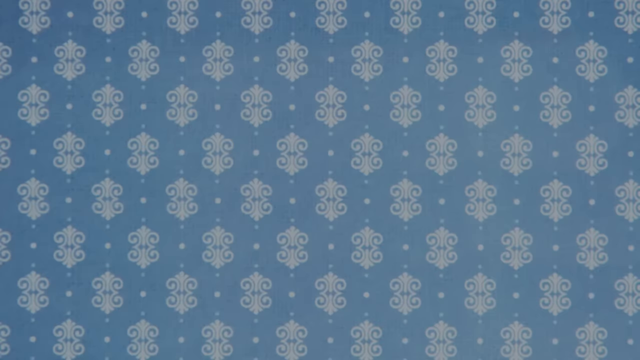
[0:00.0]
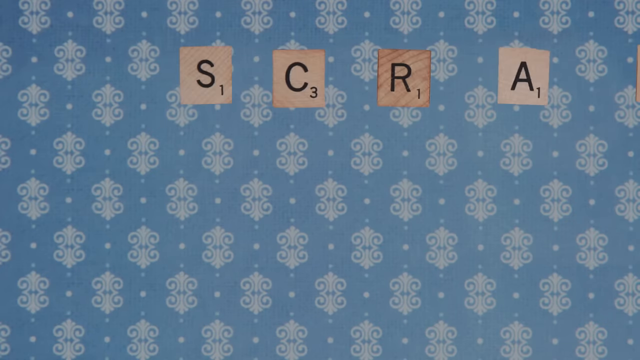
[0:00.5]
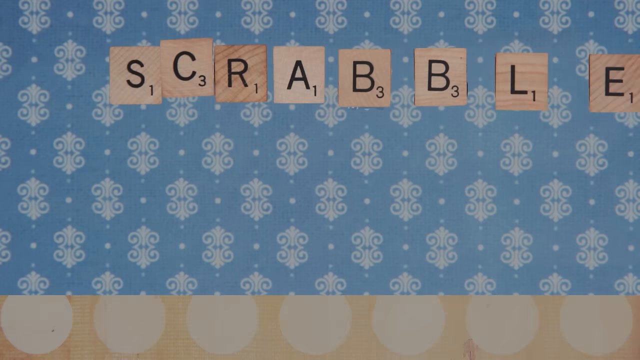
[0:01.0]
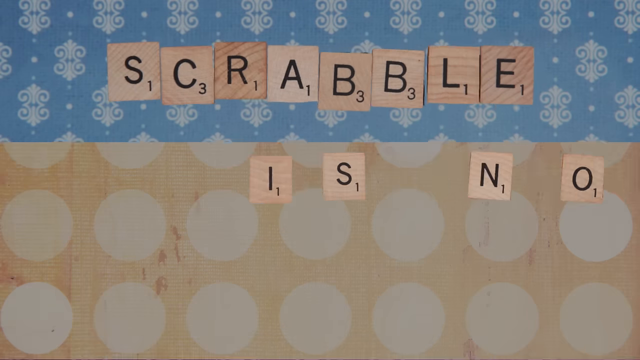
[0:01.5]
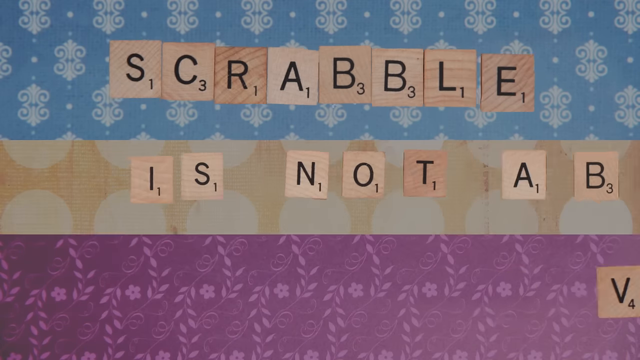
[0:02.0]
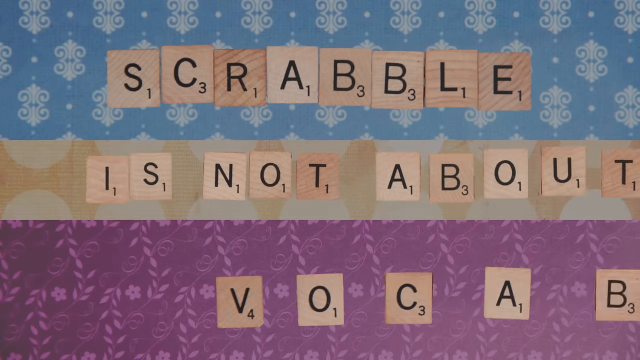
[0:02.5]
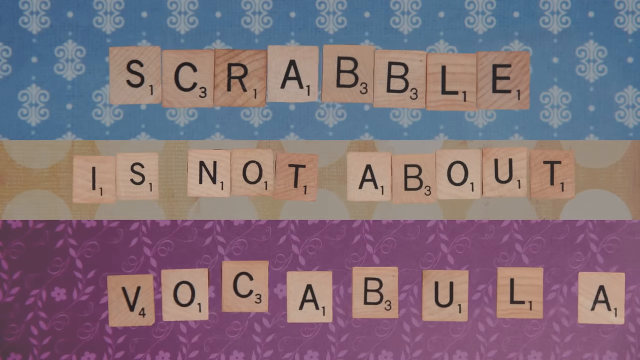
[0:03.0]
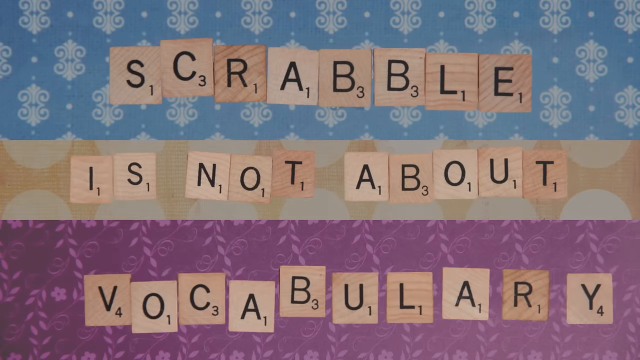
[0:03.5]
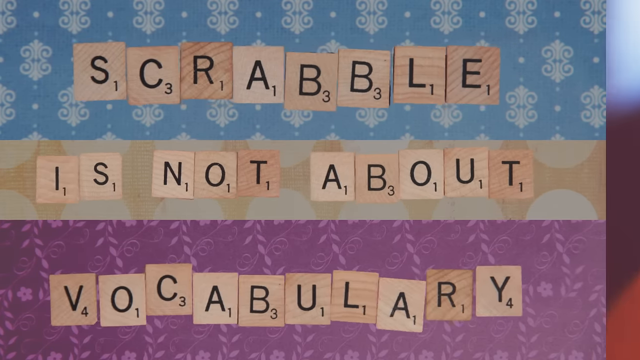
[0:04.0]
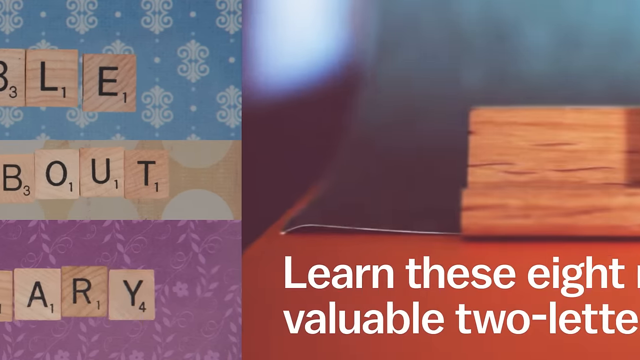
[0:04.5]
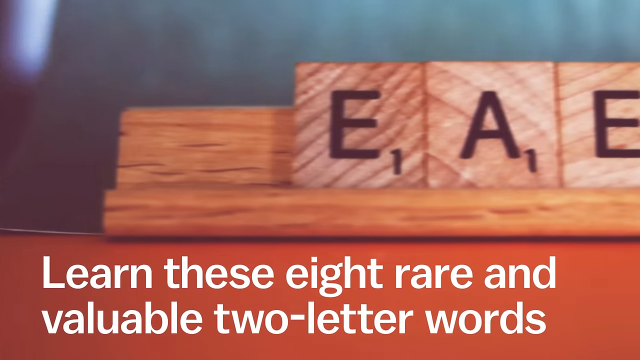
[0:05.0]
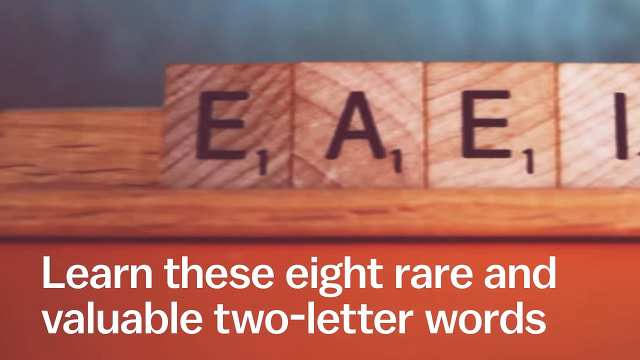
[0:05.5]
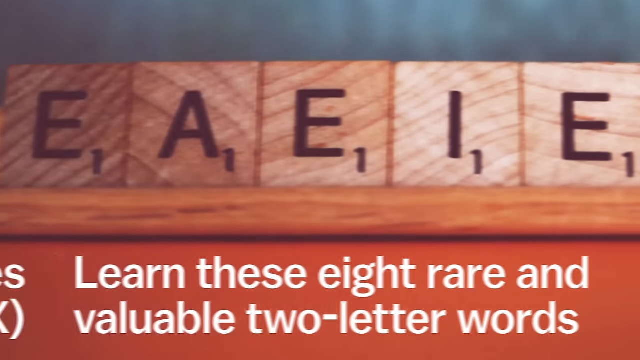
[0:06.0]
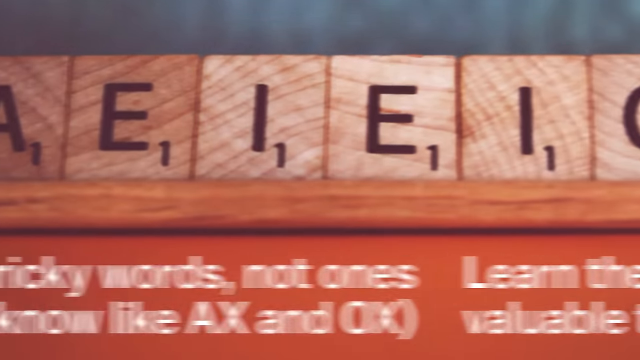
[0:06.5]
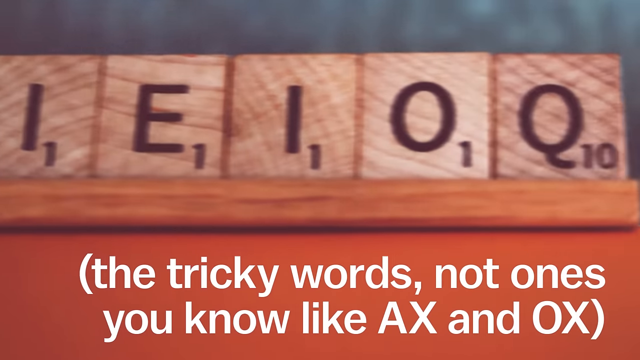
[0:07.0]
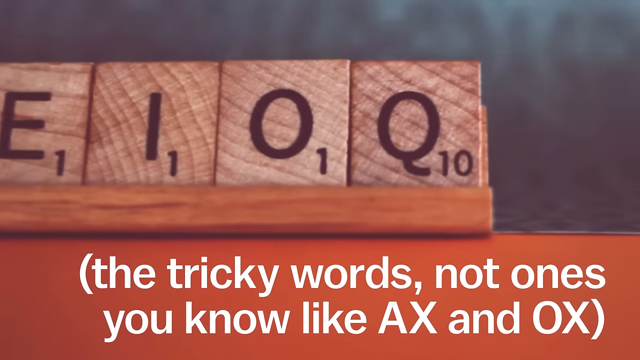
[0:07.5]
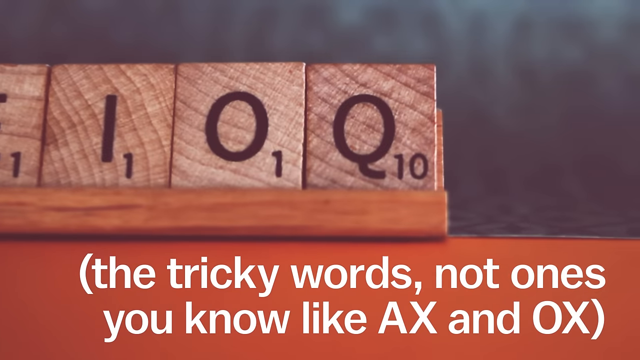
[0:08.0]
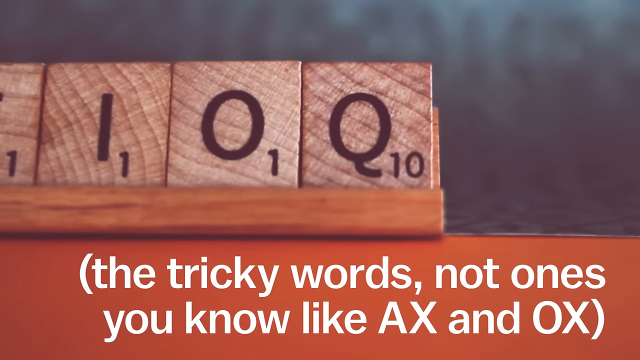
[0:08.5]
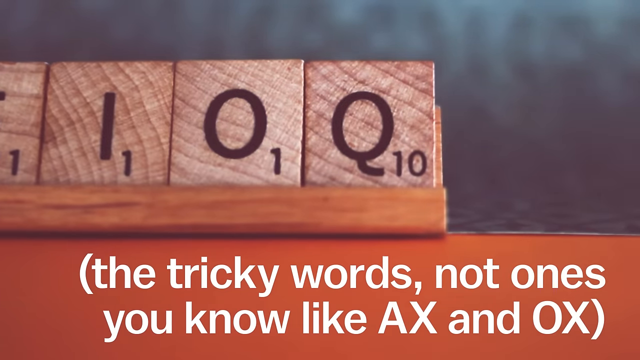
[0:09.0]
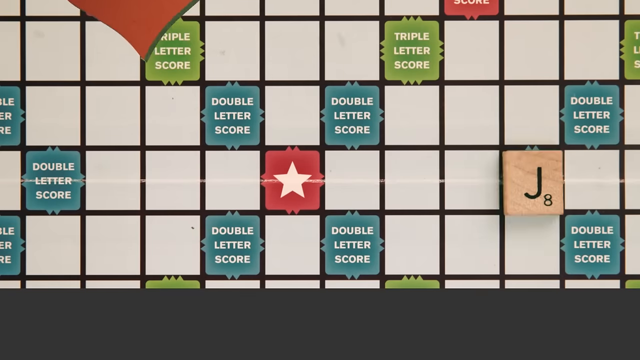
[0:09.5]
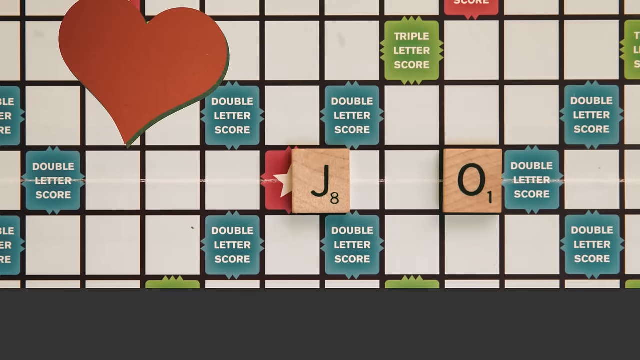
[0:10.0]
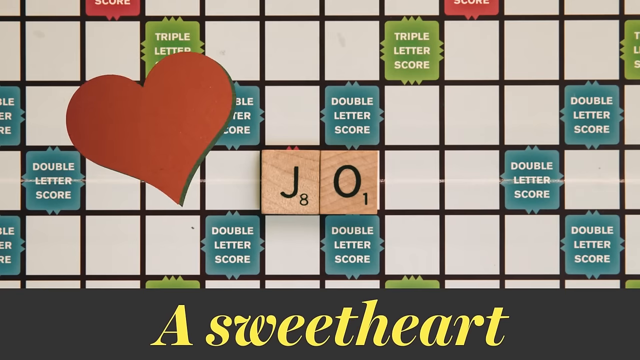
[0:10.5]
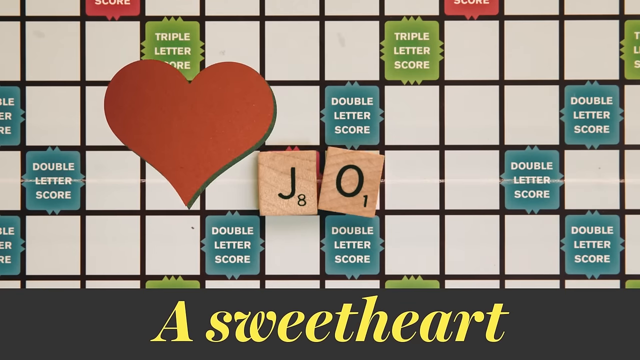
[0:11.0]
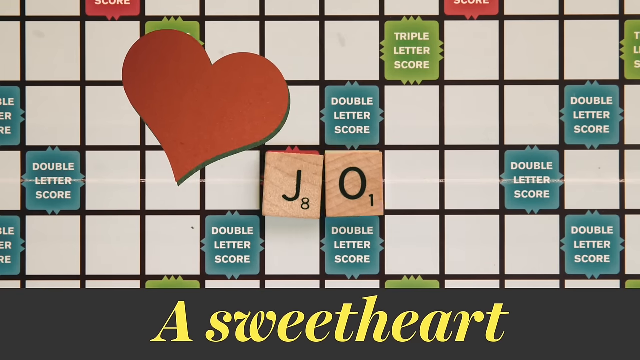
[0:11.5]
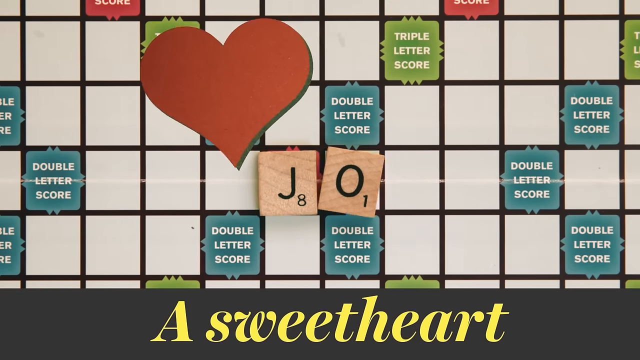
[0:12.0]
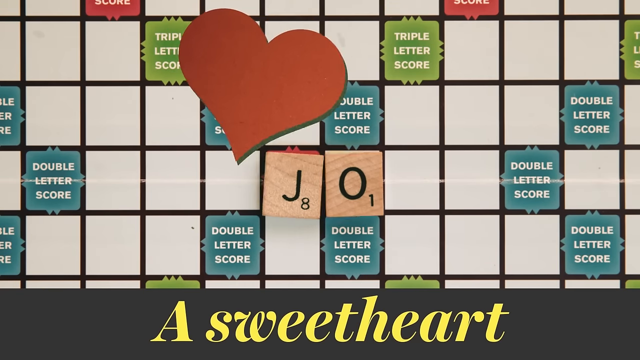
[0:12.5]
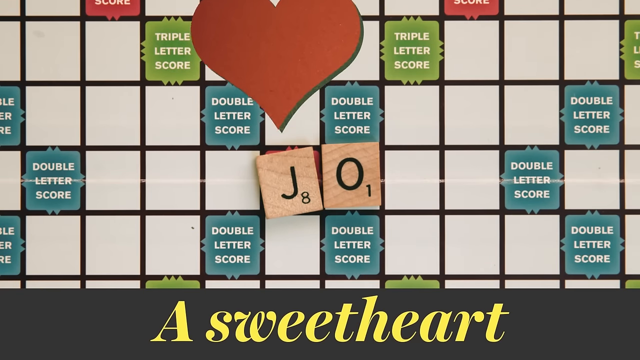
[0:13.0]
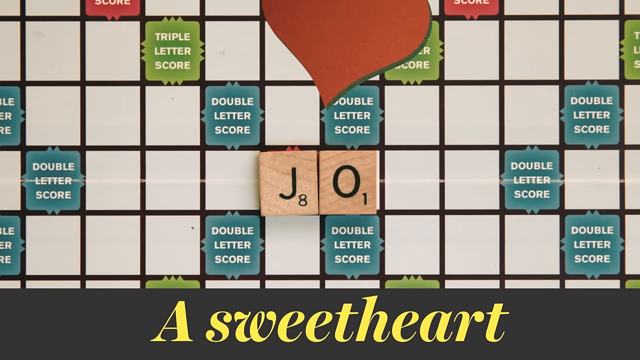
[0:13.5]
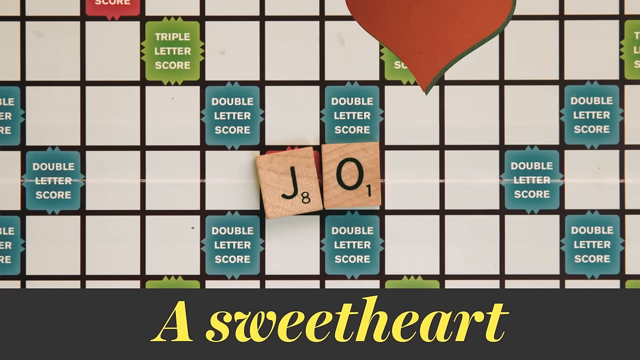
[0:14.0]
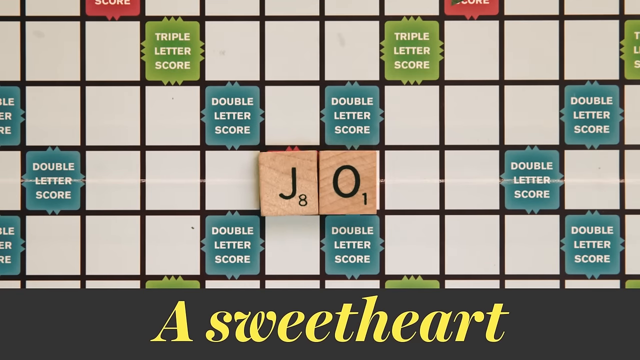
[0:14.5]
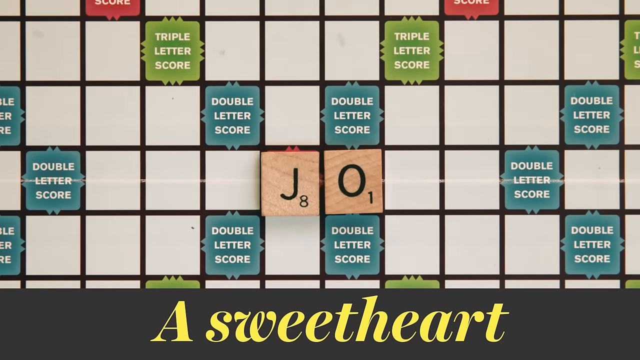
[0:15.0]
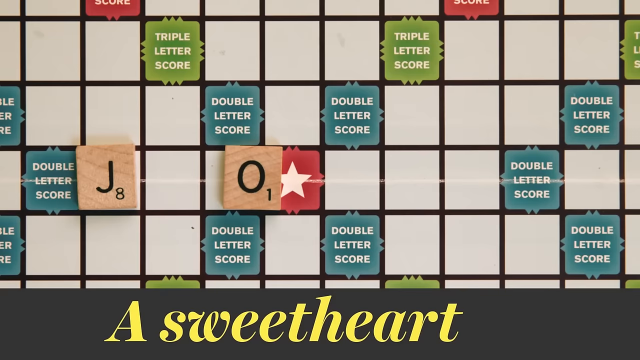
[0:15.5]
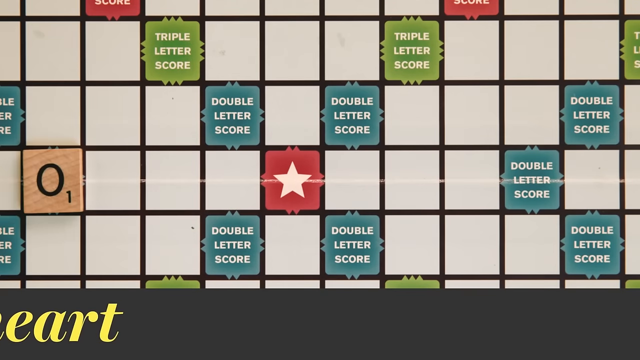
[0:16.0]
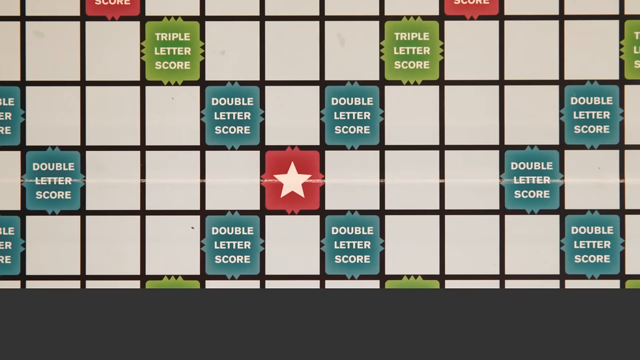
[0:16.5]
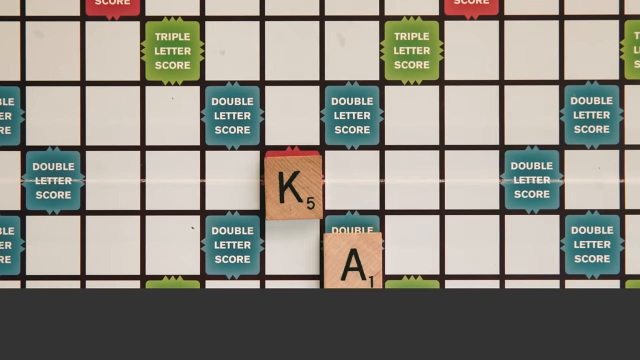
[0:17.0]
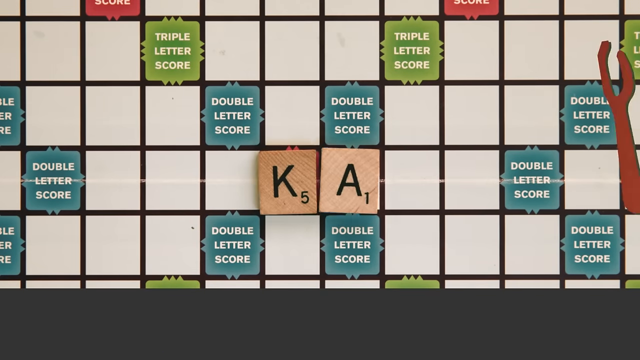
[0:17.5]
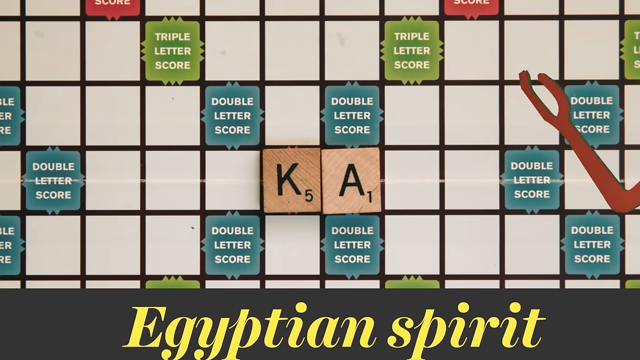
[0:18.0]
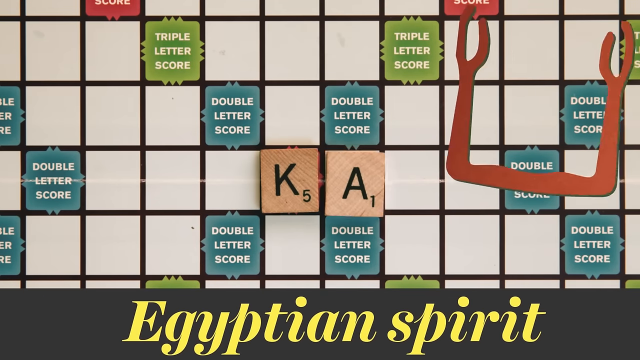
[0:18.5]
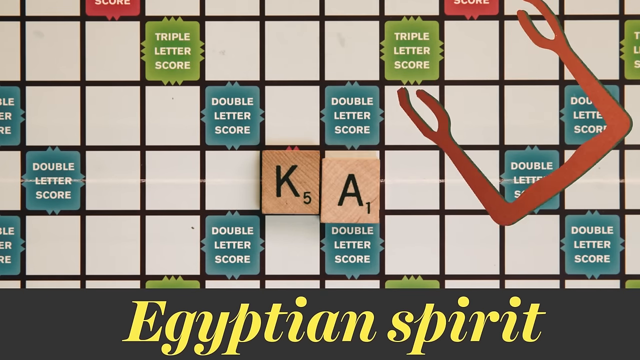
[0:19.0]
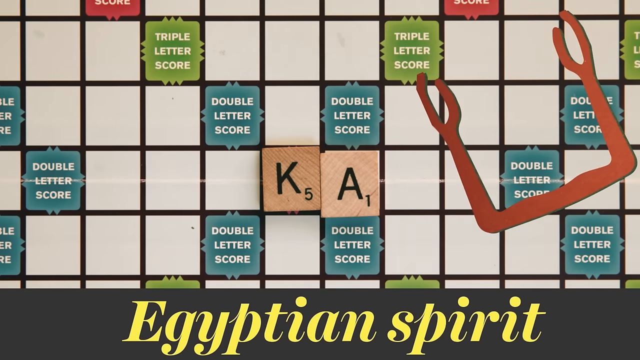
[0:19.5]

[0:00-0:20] The video opens with the words "Scrabble is not about vocabulary." It then cuts to a screen showing various Scrabble words, with text at the bottom reading "learn these eight rare and valuable two-letter words. The tricky words, not the ones you know like AX and OX." Next comes a Scrabble board with colors such as blue, green and red. The text "Joe" appears with a heart to its left, and yellow text at the bottom reads "a sweetheart." The video then cuts to more Scrabble letters spelling "KA," with yellow text at the bottom reading "Egyptian spirit."